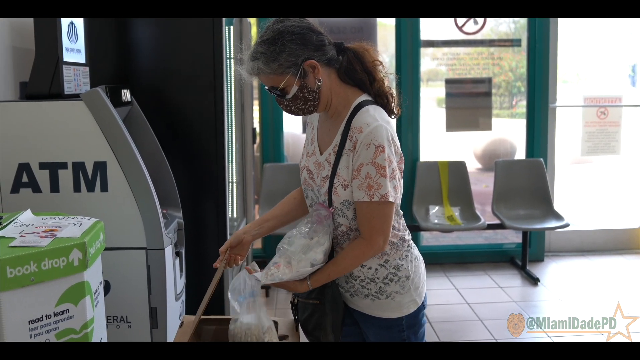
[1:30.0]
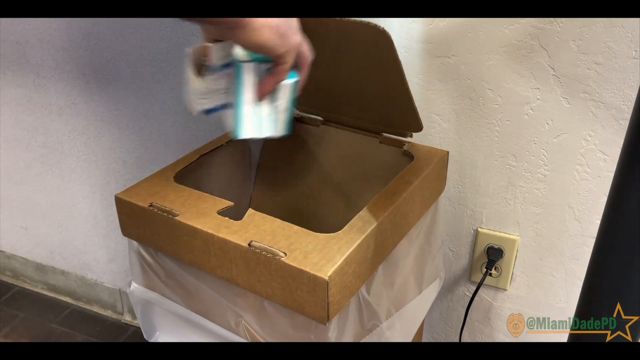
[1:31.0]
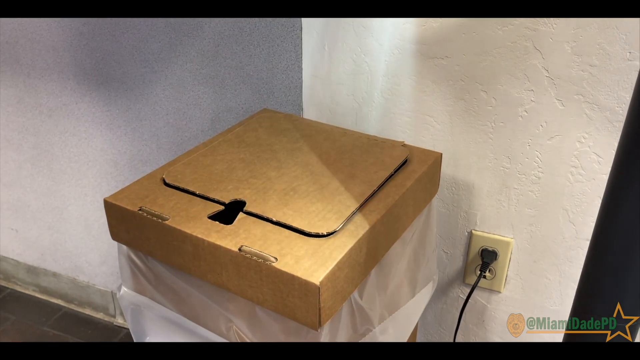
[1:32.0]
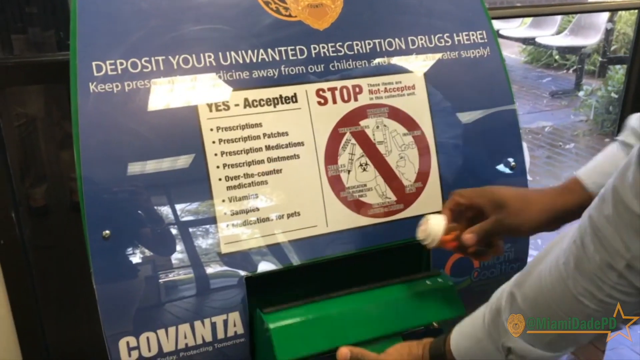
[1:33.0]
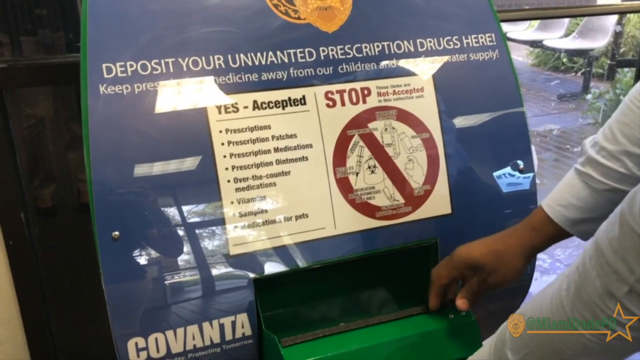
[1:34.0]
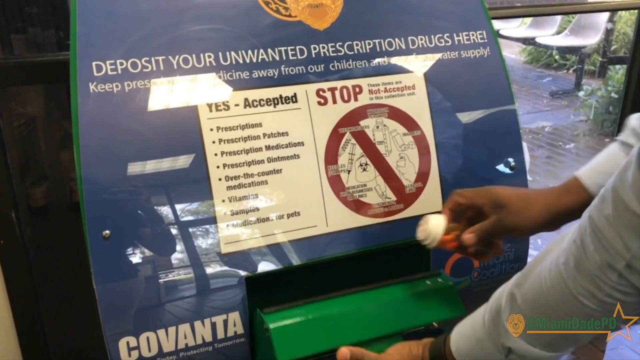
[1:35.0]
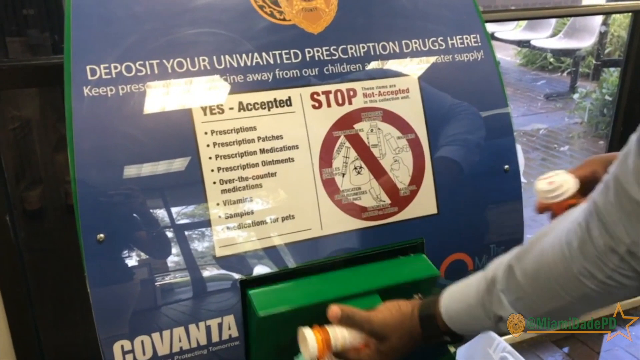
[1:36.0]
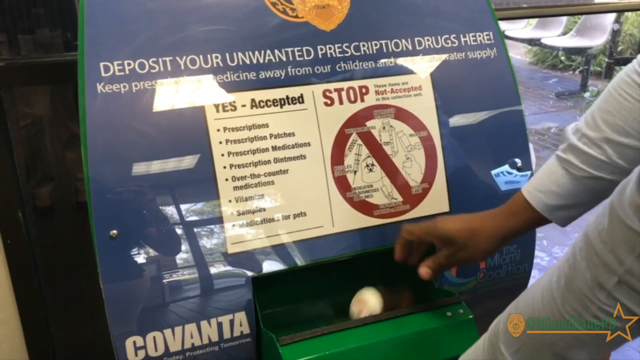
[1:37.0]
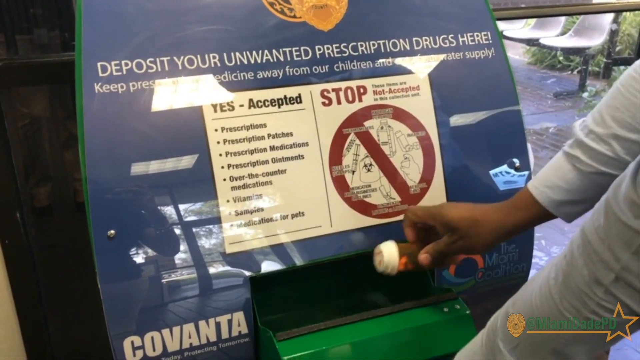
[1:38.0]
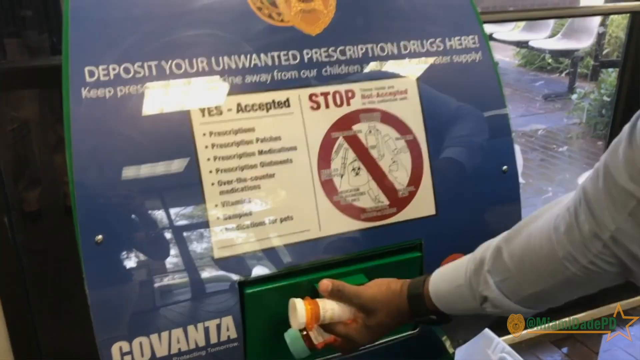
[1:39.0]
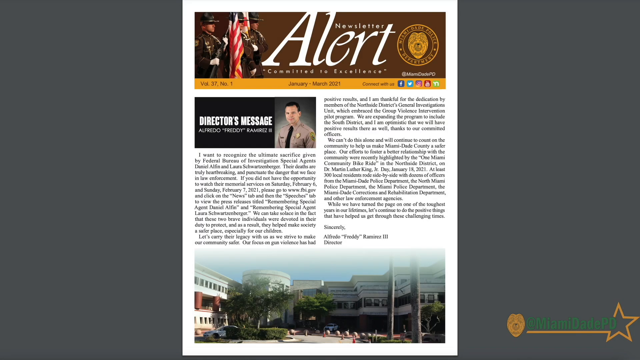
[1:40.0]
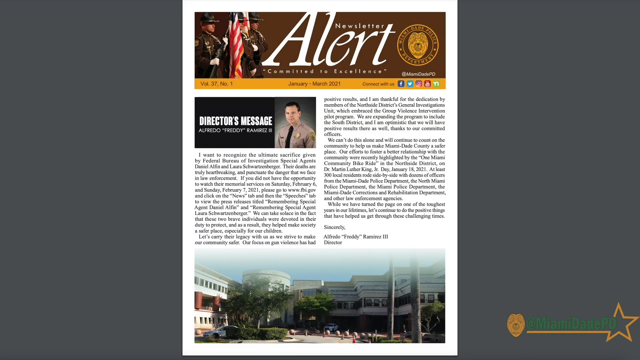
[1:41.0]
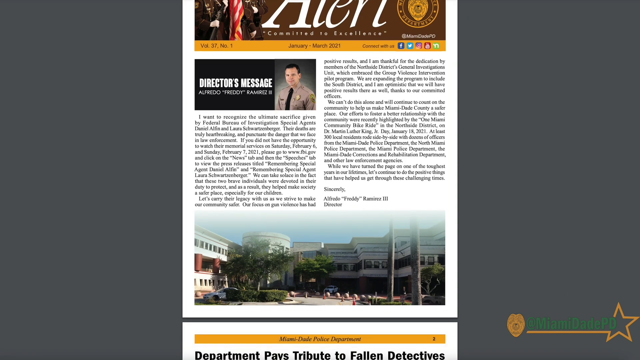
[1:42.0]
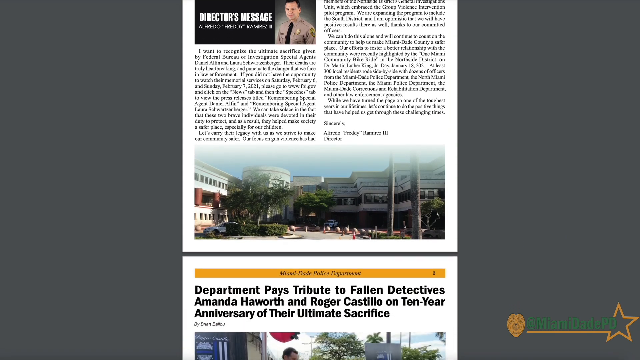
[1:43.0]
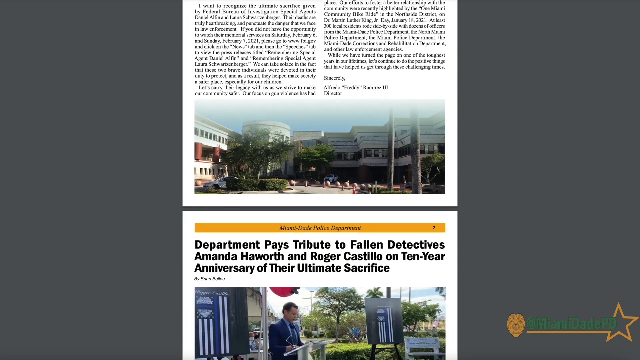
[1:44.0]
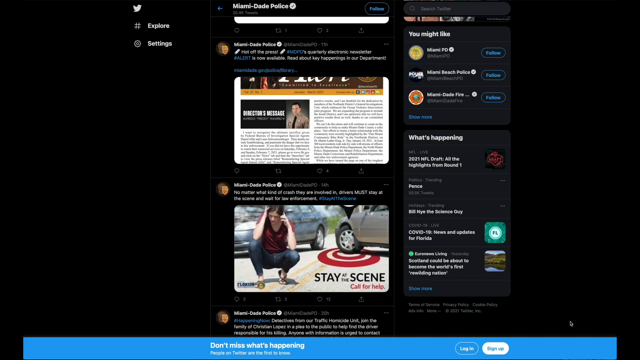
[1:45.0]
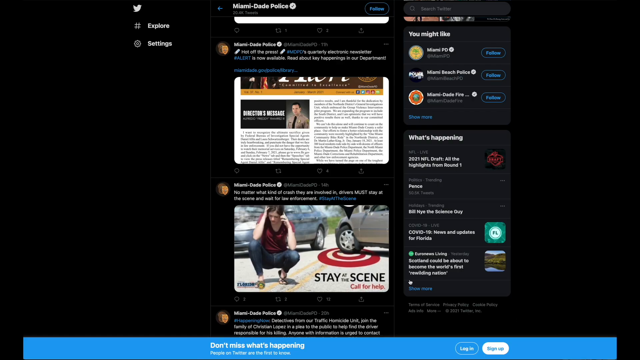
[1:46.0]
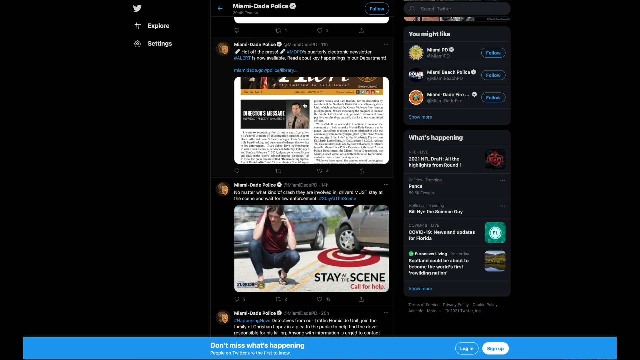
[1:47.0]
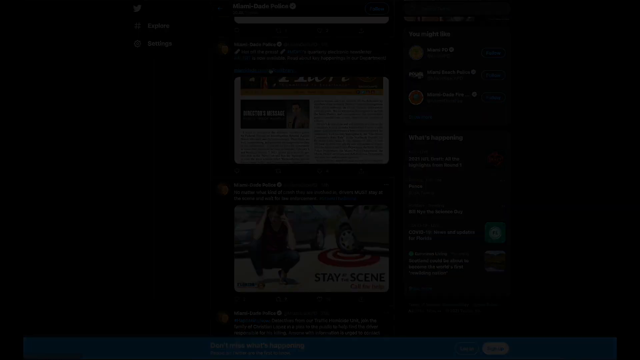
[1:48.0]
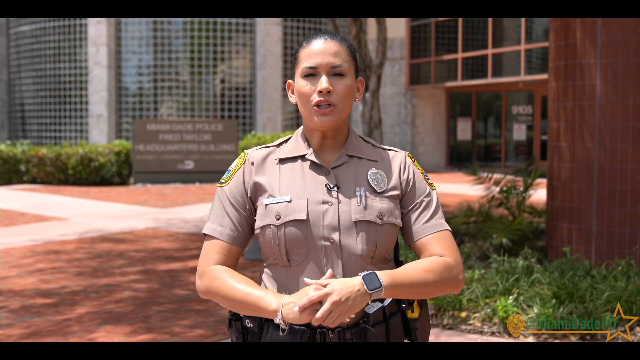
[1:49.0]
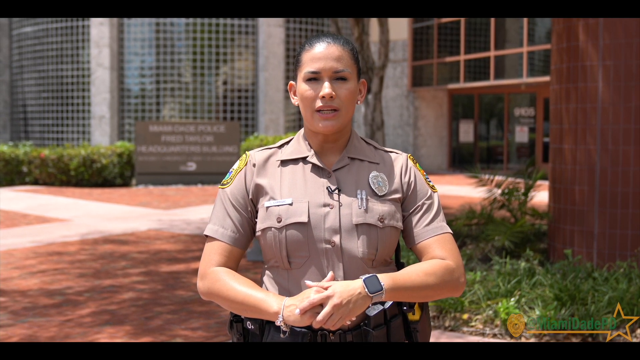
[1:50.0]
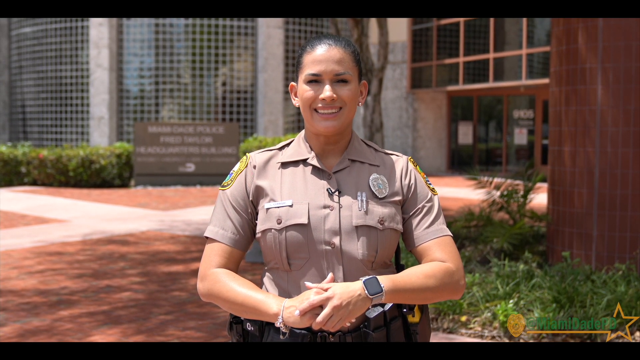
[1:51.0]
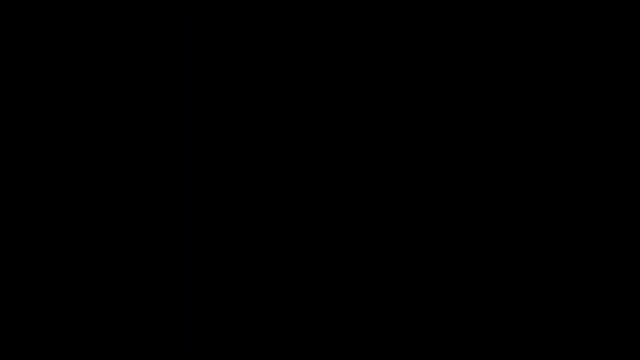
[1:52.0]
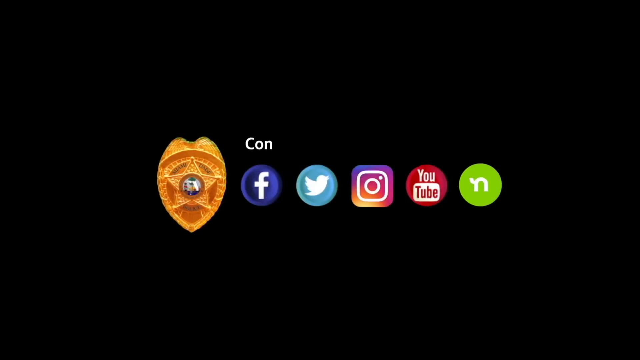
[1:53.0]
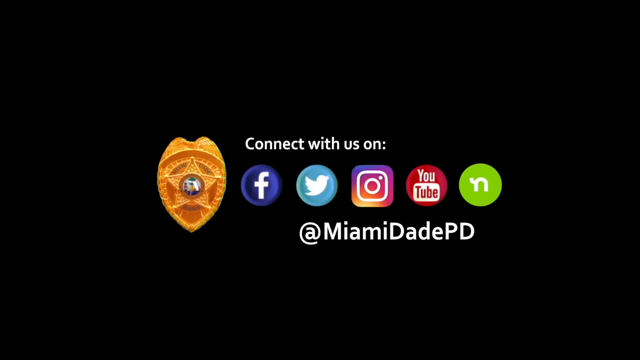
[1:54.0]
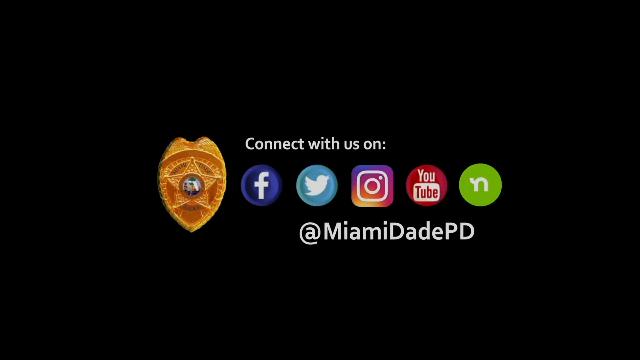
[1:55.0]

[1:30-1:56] The video shows where to deposit unwanted prescription drugs and to keep them away from children. It ends with an invitation to connect on Facebook, Twitter, Instagram and YouTube at miamidadepd.